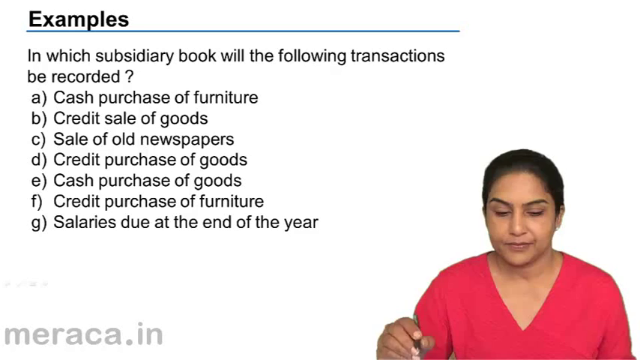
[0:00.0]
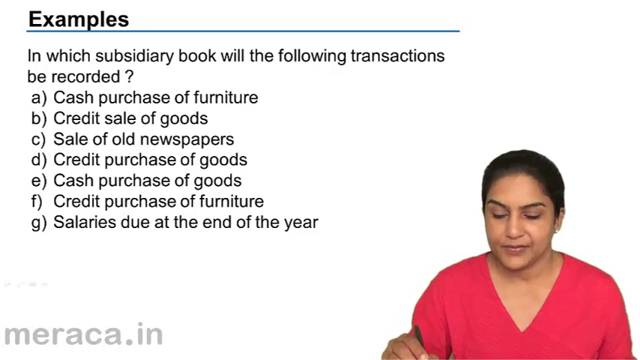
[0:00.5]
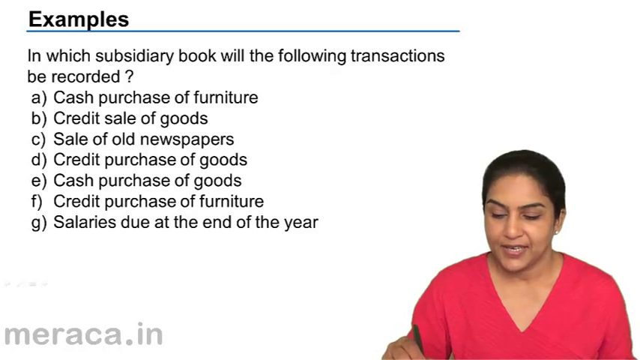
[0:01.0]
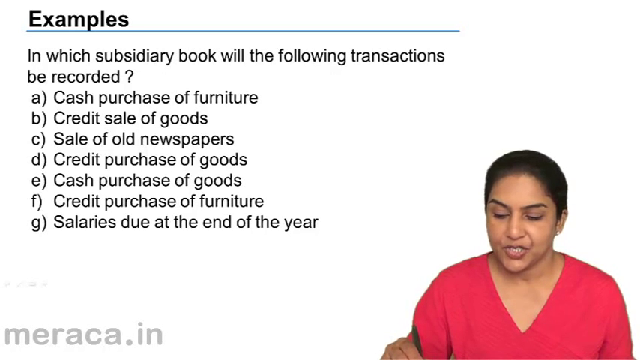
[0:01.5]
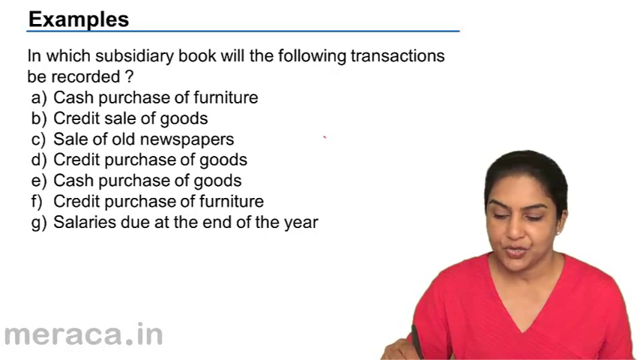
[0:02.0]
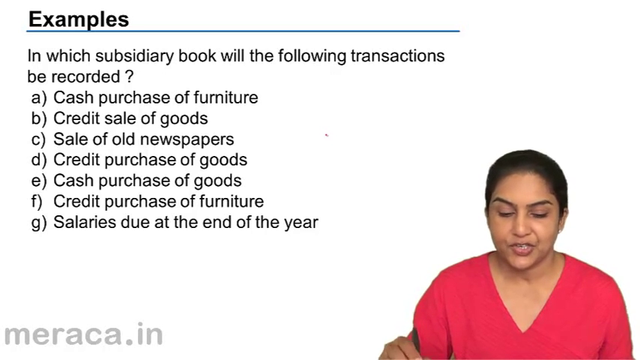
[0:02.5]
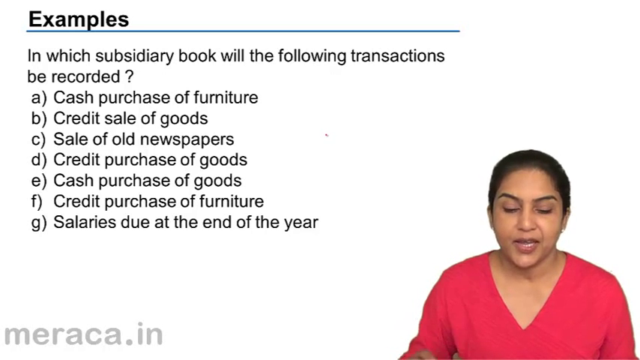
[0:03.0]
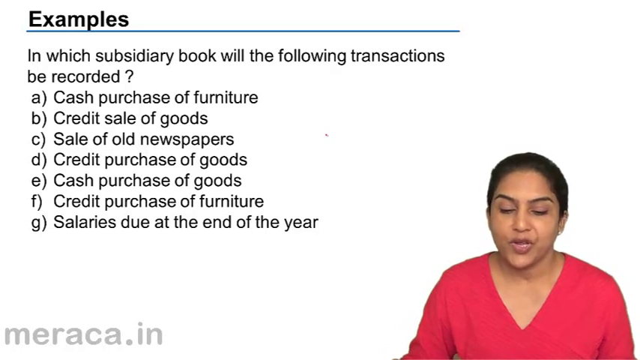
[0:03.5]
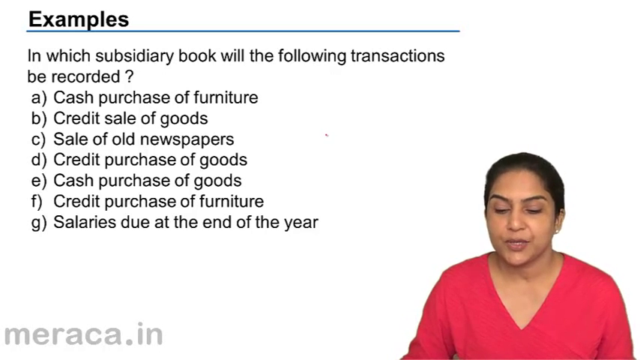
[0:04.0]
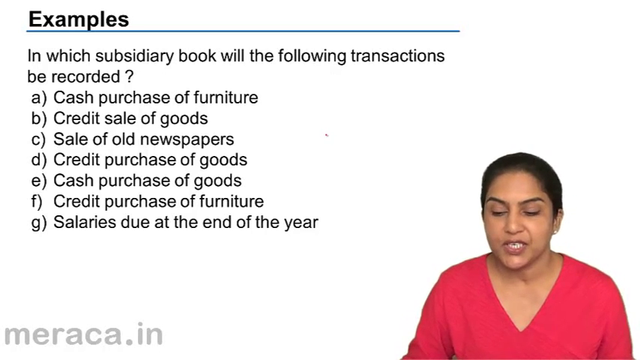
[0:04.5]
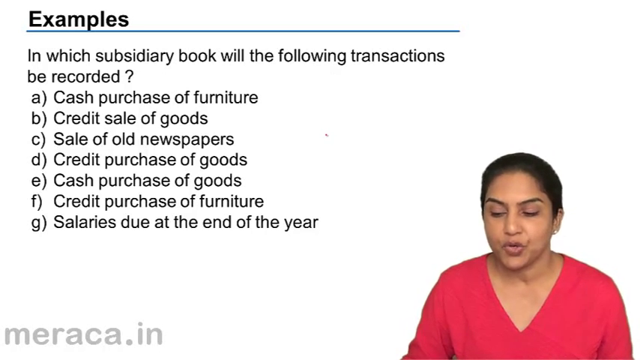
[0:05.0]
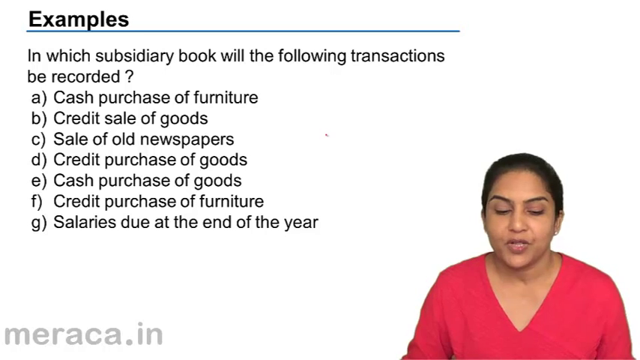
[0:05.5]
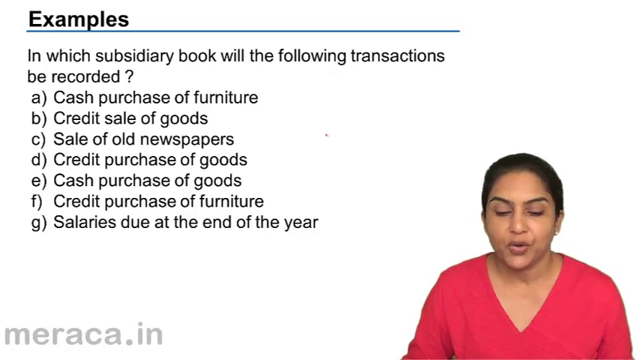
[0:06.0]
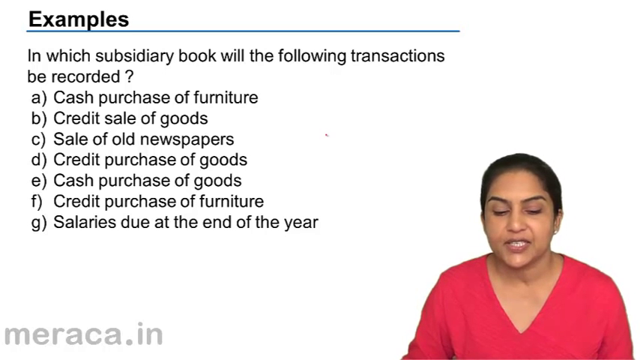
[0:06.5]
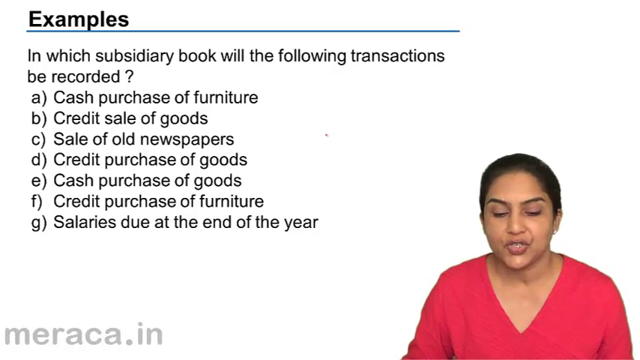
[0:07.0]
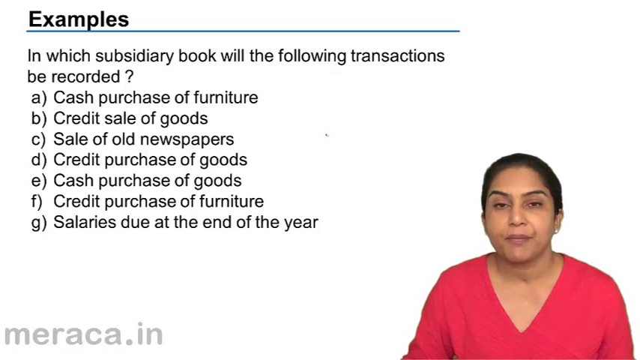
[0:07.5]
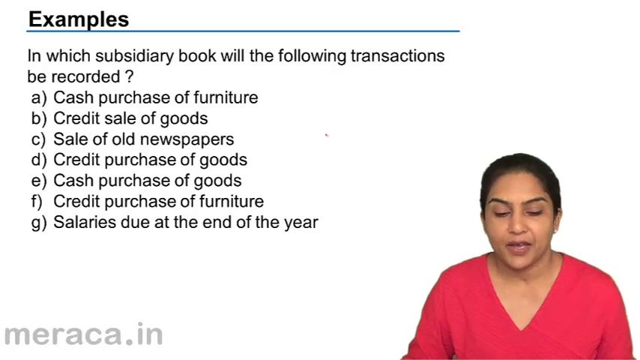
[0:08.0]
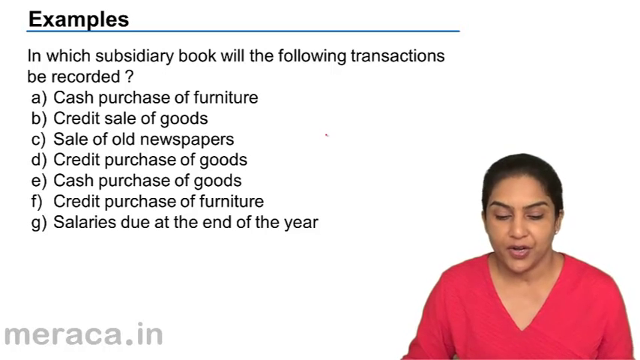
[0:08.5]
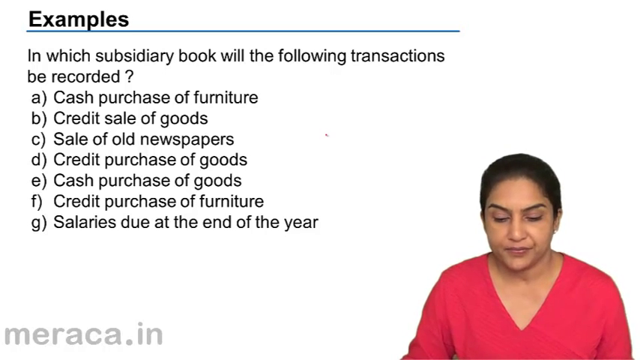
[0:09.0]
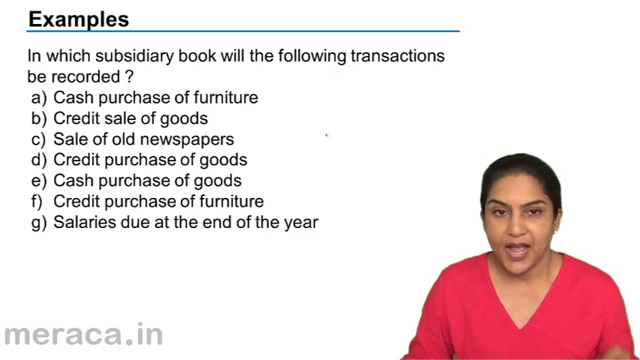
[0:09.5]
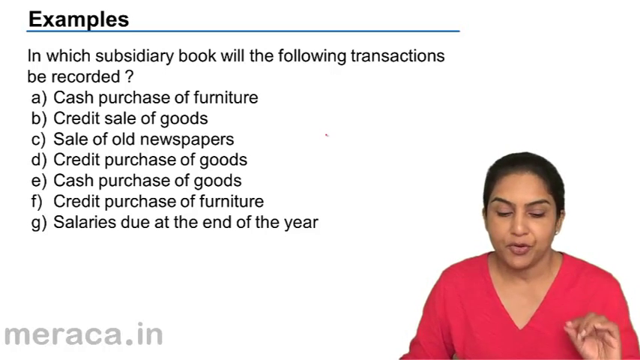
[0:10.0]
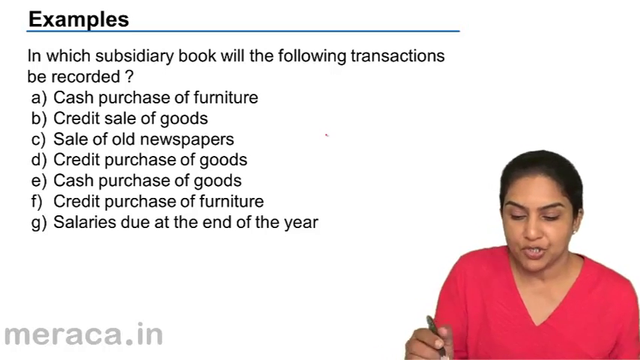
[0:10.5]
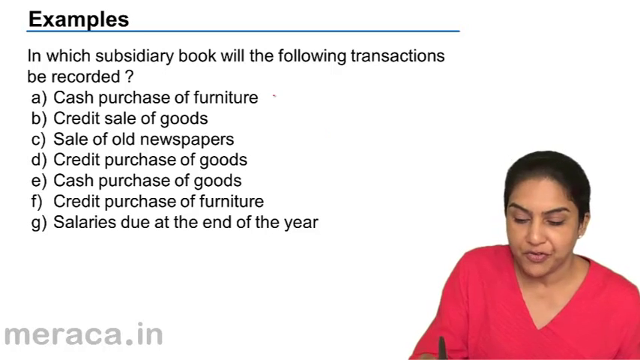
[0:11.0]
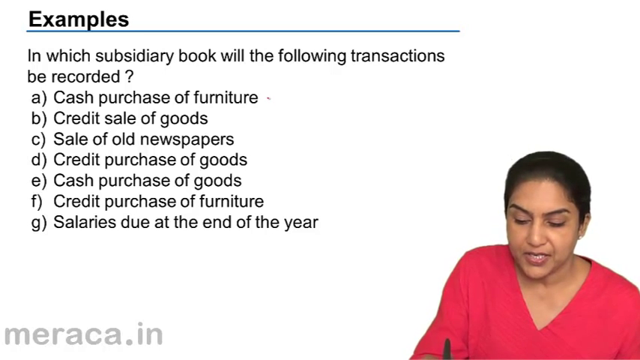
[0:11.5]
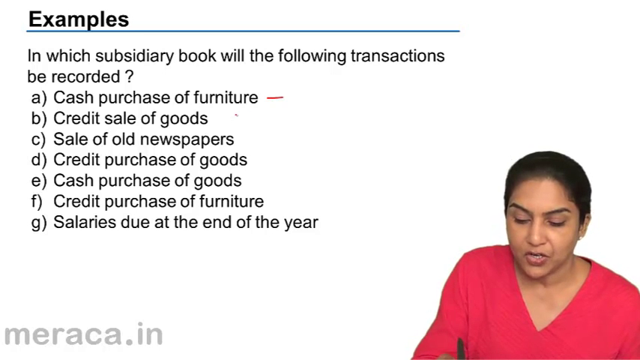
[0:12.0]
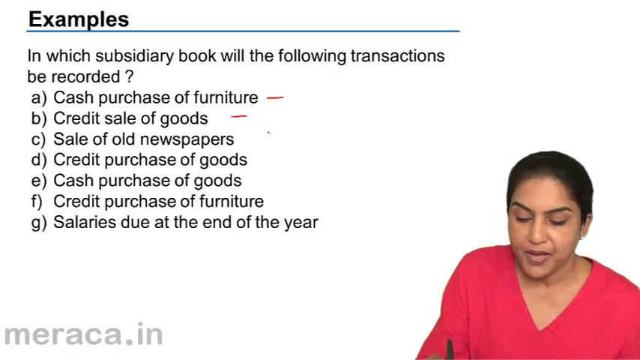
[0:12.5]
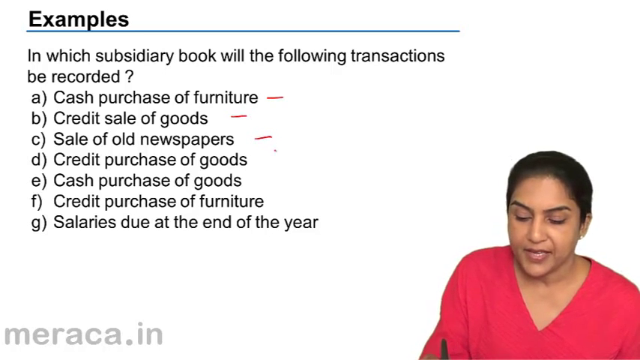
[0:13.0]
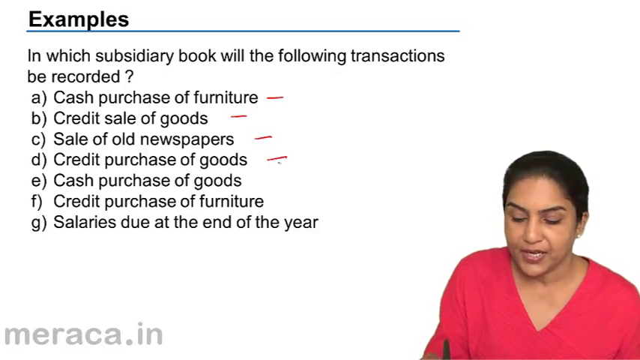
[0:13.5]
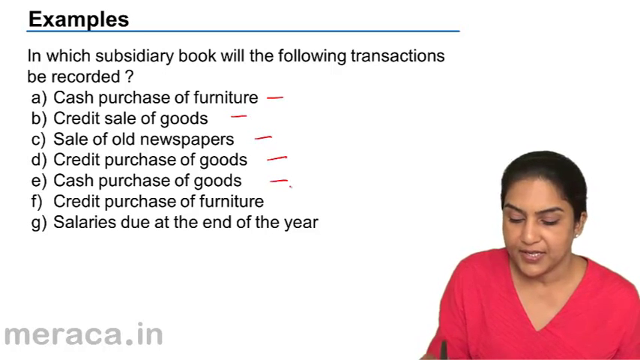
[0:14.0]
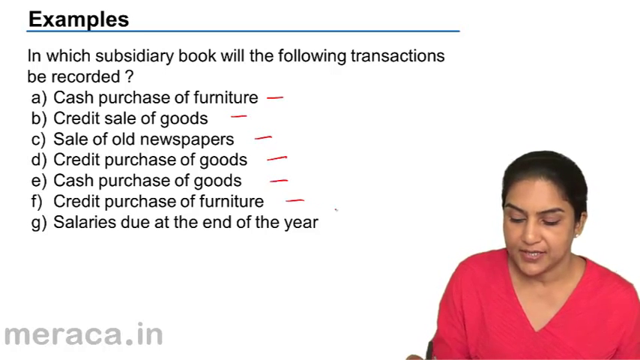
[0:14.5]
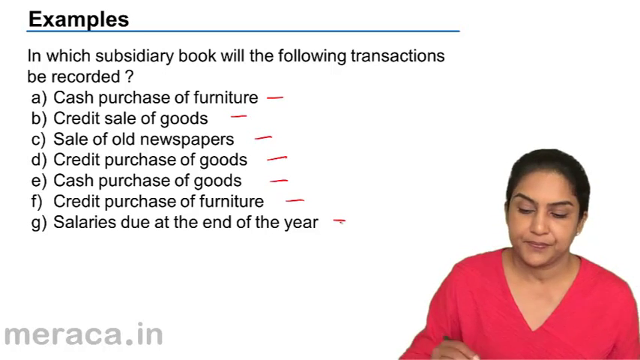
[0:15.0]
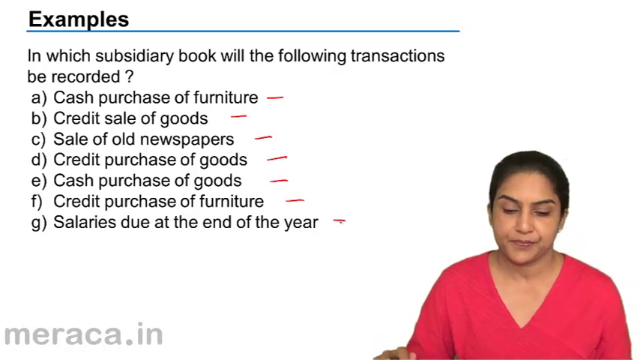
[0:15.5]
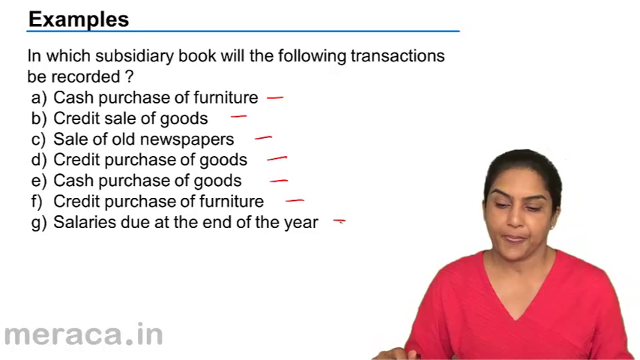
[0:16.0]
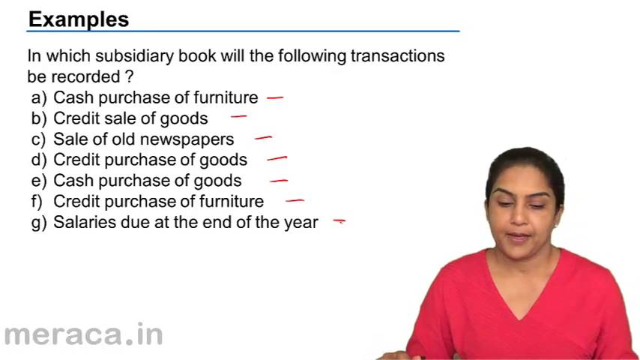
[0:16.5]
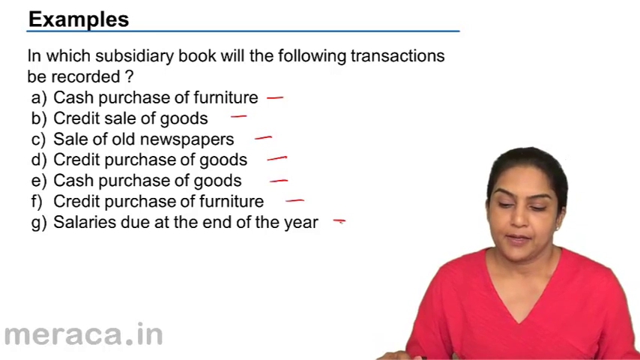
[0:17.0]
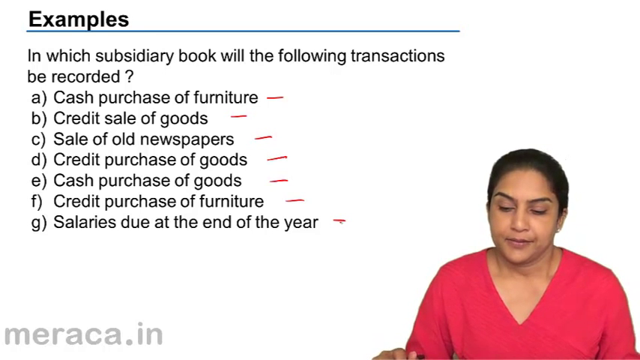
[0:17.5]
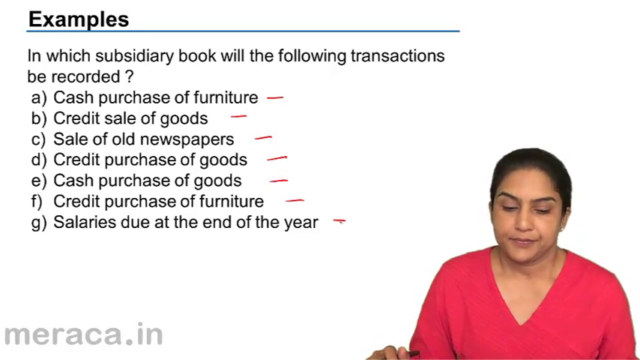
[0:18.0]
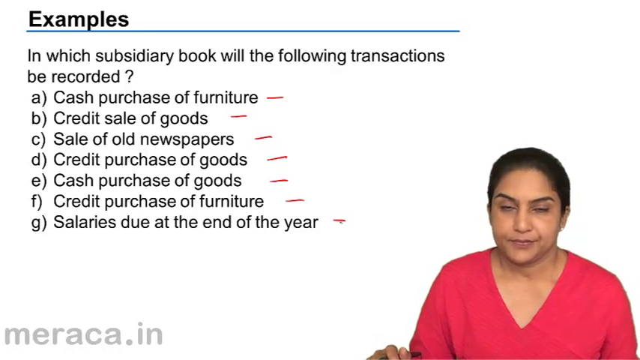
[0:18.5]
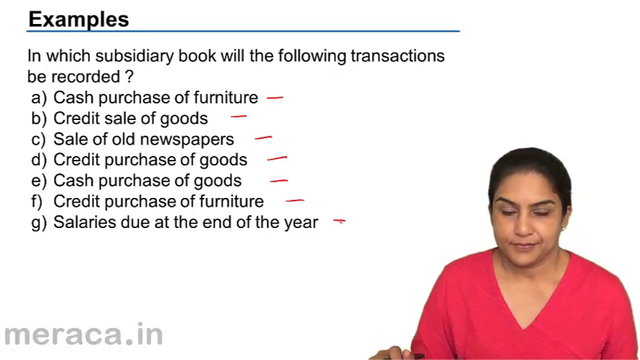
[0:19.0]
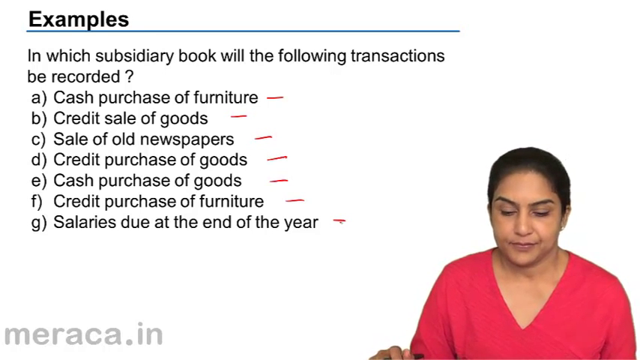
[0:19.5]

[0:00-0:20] This is a test tutorial, with the speaker or host in the bottom right corner. She looks like she is of South Asian descent, has her hair back and wears a pink V-neck blouse. On the screen behind her is an example question that reads "in which subsidiary book will the following transactions be recorded?" Options A to G are listed: A, "cash purchase of furniture"; B, "credit sale of goods"; C, "sale of old newspapers"; D, "credit purchases of goods"; E, "cash purchases of goods"; F, "credit purchase of furniture"; and G, "salaries due at the end of the year". A website, "maraca.in", appears in the bottom left corner. She then draws a red dashed line after each option, from A to G.